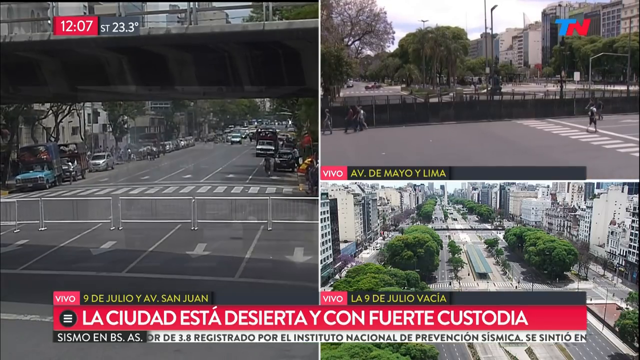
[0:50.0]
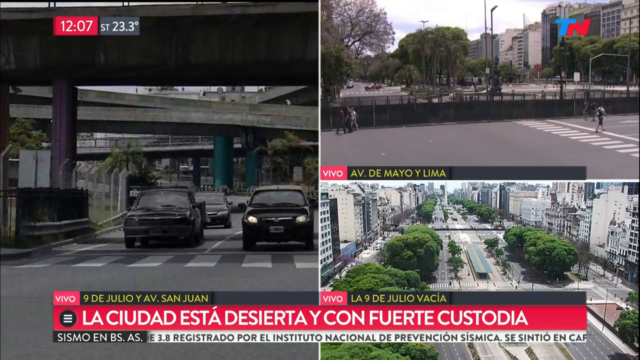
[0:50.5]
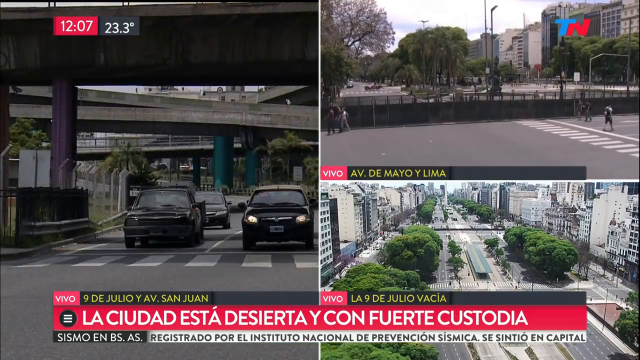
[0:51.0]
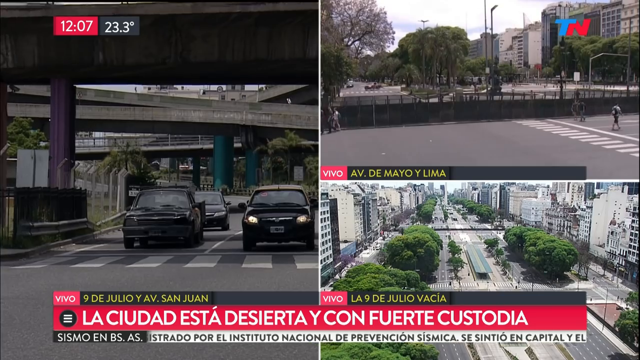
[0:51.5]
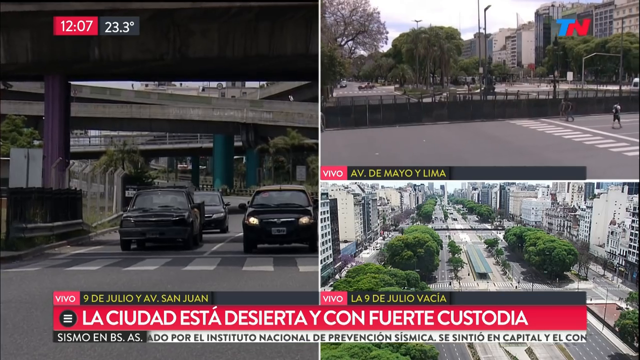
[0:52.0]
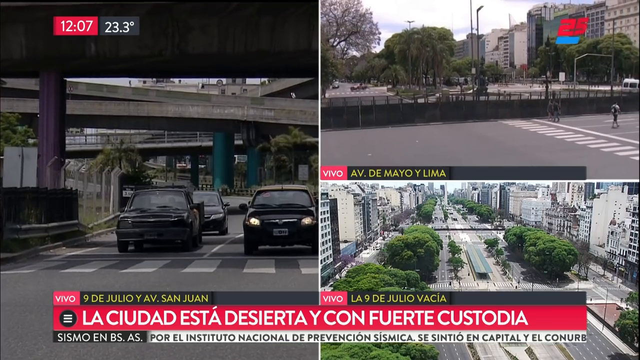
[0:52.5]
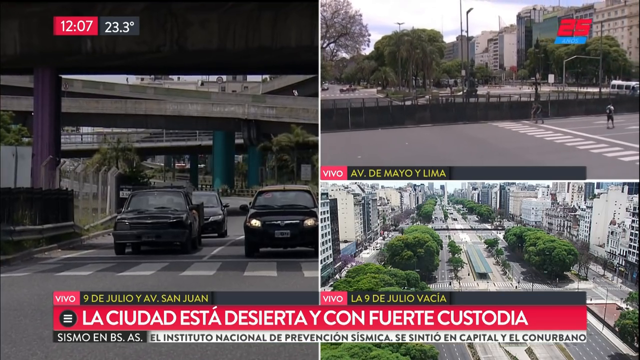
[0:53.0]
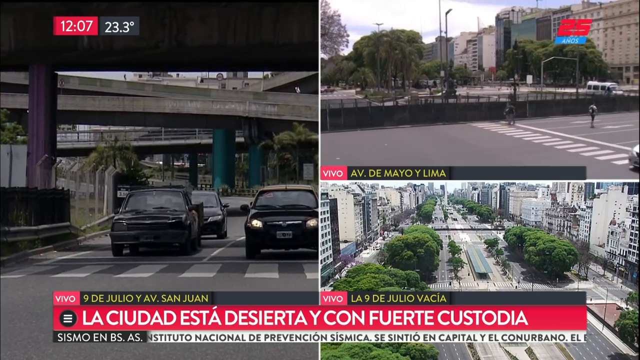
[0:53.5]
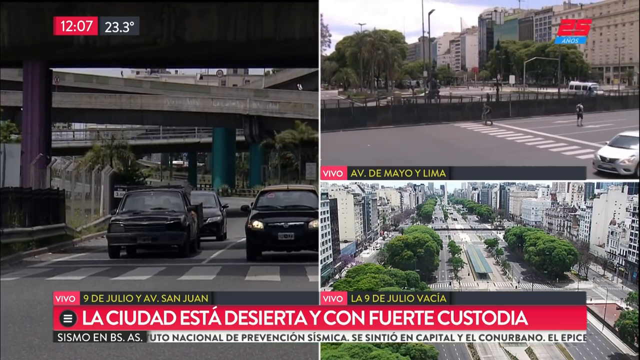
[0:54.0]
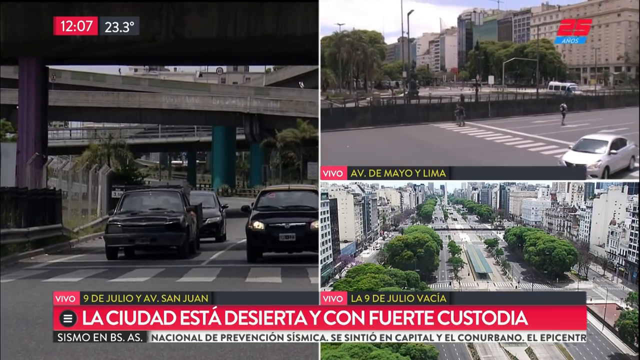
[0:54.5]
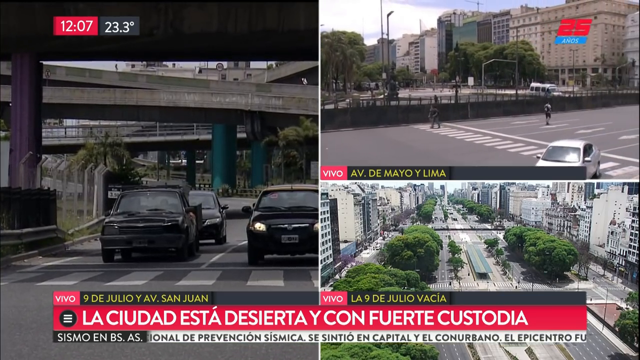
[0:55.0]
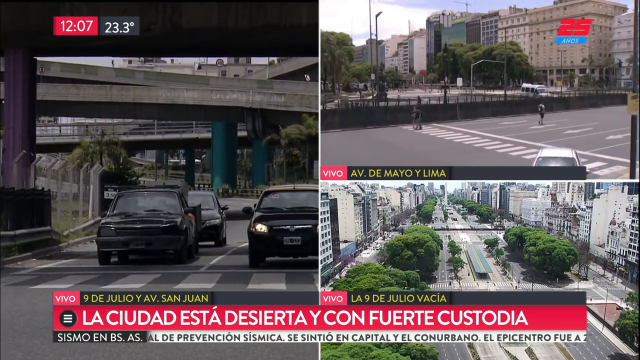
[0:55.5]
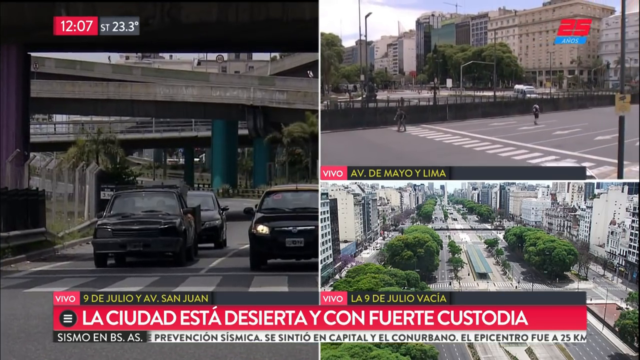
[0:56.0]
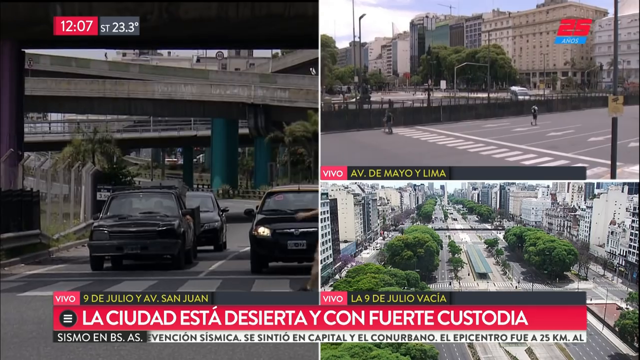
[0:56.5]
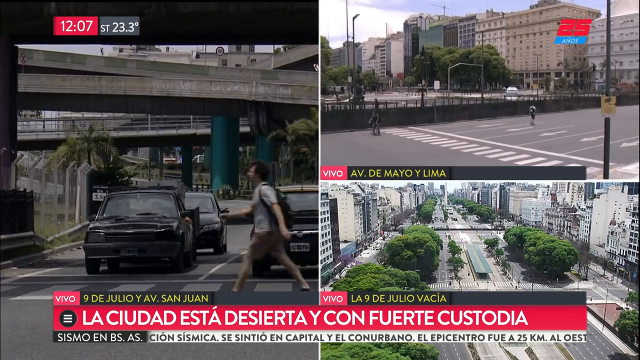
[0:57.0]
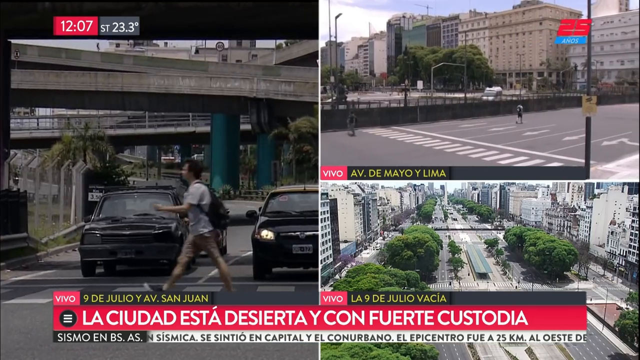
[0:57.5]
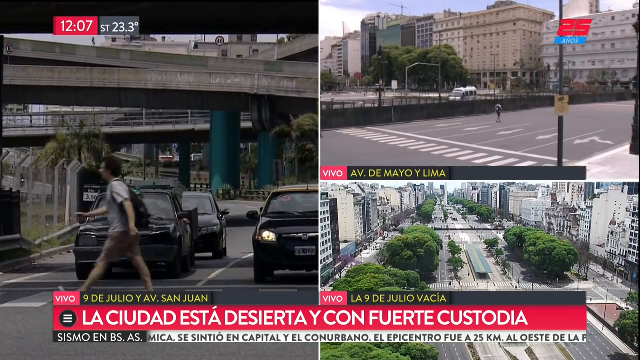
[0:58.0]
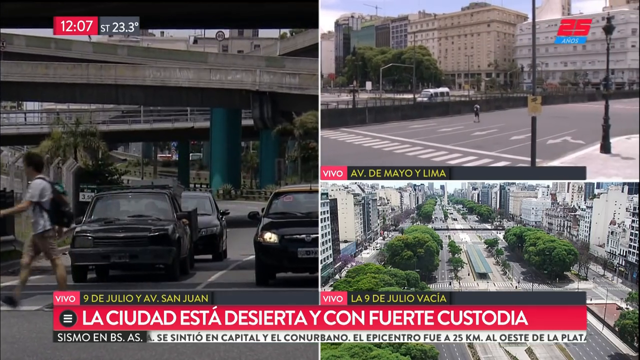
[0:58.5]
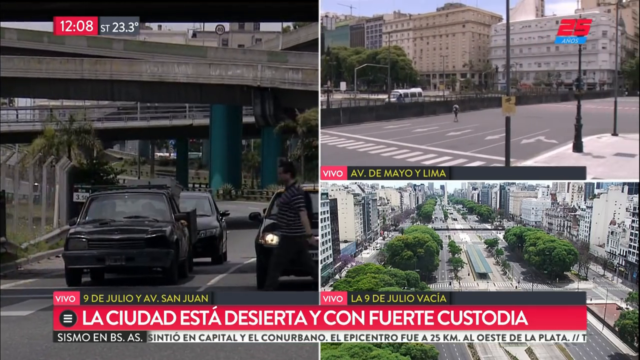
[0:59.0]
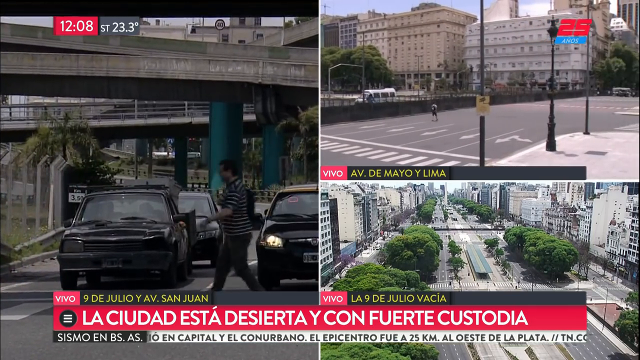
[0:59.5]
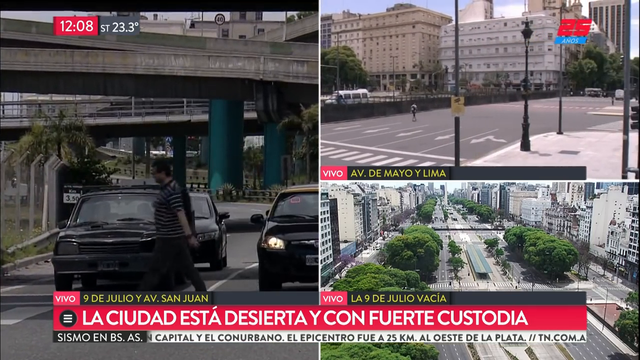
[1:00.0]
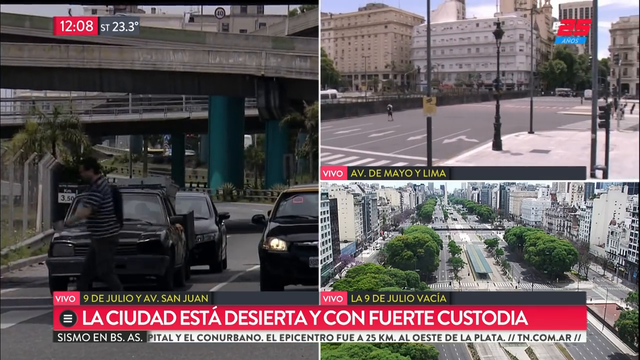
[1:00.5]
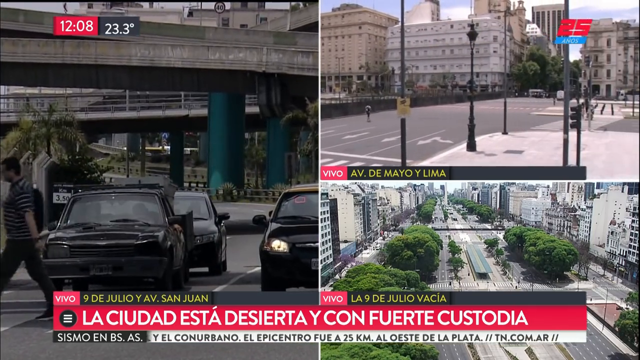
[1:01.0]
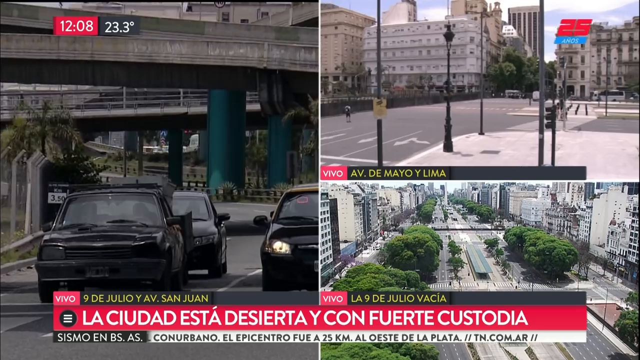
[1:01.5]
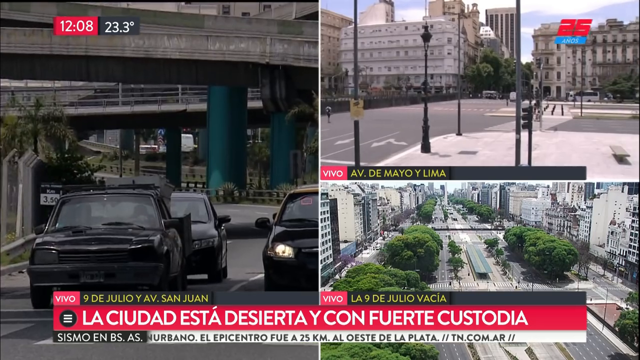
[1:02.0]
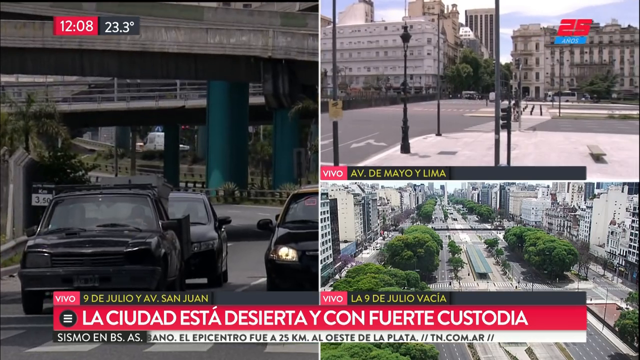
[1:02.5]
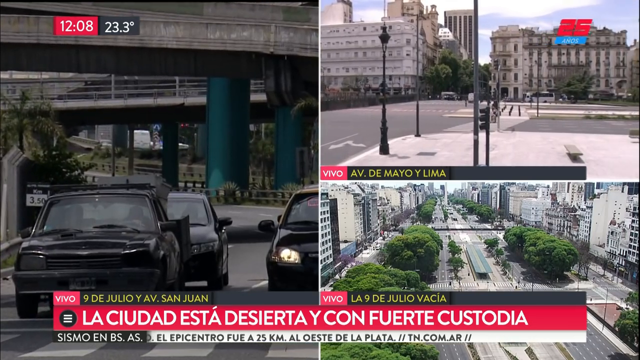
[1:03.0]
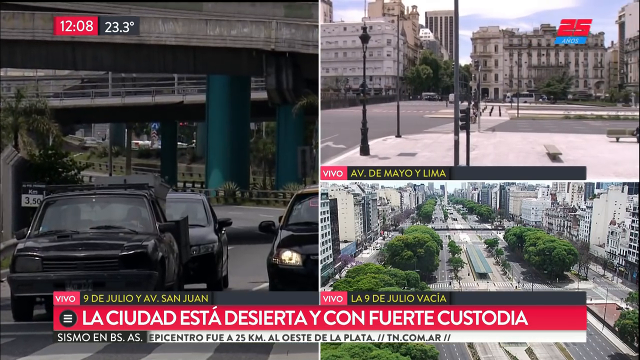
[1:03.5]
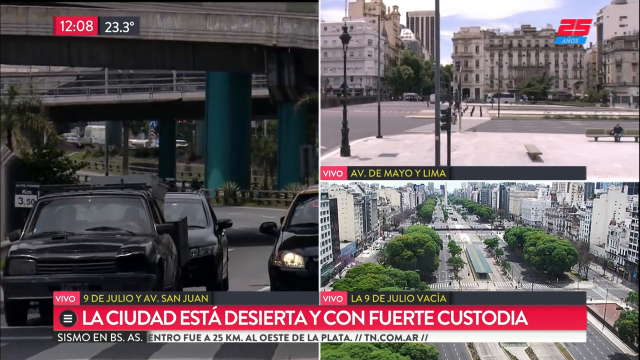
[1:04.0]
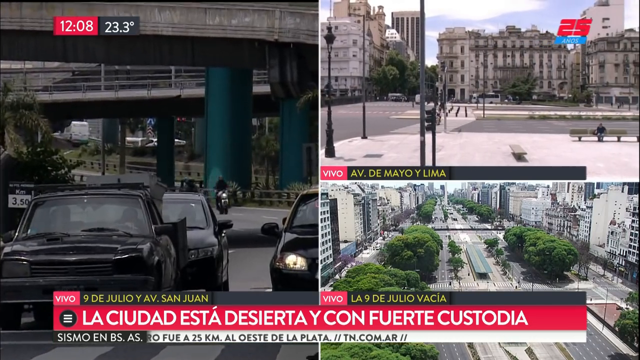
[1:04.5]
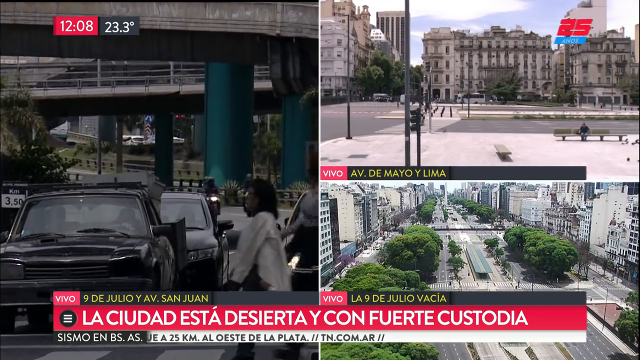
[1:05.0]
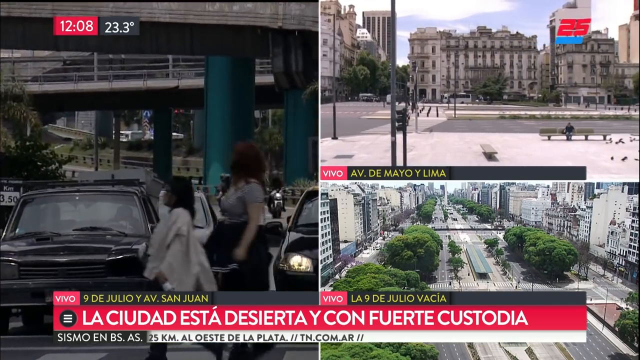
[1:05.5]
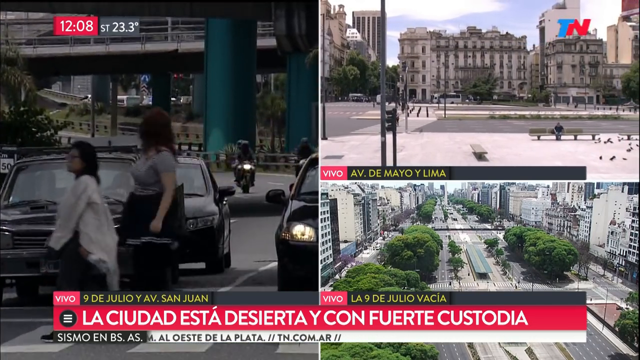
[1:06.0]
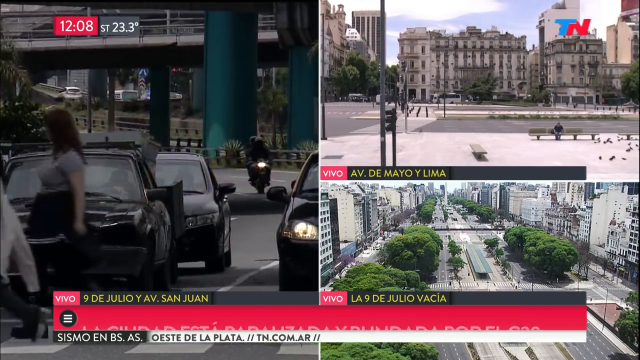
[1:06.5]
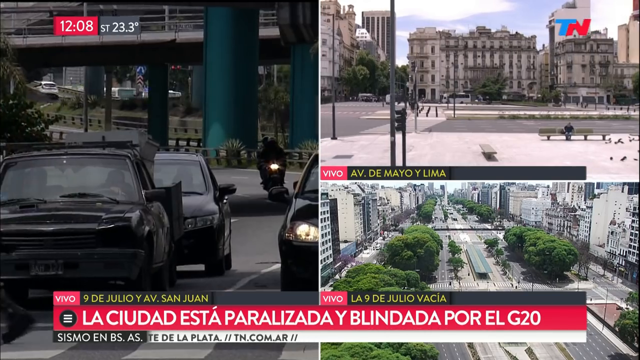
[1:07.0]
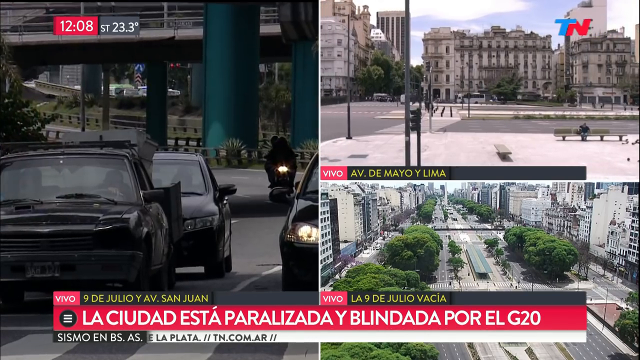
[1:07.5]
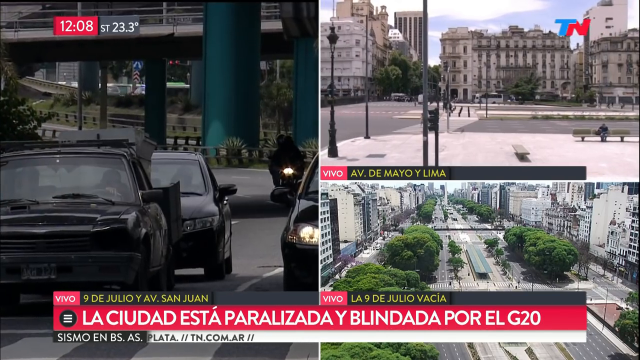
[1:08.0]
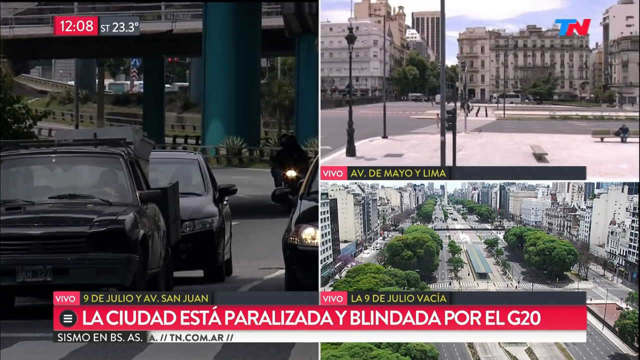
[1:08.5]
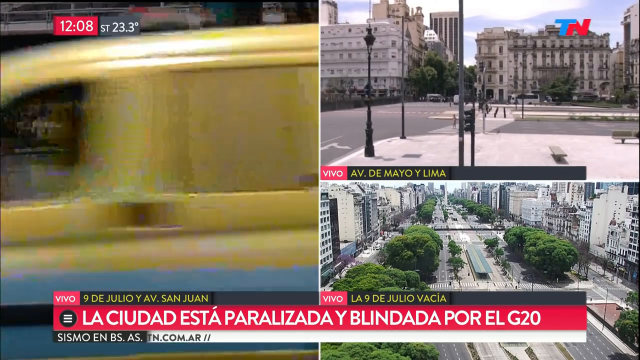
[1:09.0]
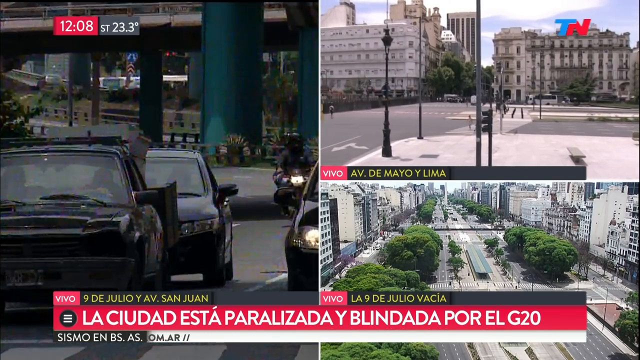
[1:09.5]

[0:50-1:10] The screen shows three different traffic views: a larger image on the left and, on the right, two images split in half. On the left, many vehicles are on the side of the street, and an area looks like it has been cut off, as if for setting up something. Nothing is in it, but the road has definitely been cut off with metal gates that nobody is standing by. No cars go through, and white arrows in a crosswalk point toward the viewer. In that box, a very small red rectangle shows the time, and a gray box shows "ST 23.3 degrees." In the top right image, people walk by what seems to be a closed-off, gated area with a black screen, and somebody walks through a crosswalk. The bottom right image shows a bunch of trees in what appears to be a very big city with roads. The left image then changes to a view from under a bridge, where cars stop right before the crosswalk; one person walks across it, then another, and people are behind it. The top right image shows buildings as the view pans around; they look like old buildings, very similar to each other in color, style and age. The bottom right image has not changed; only the left and top images change.